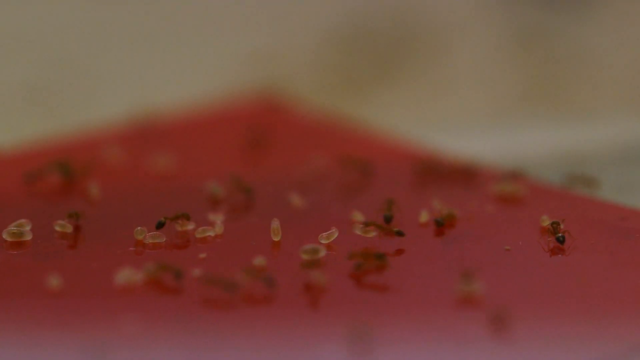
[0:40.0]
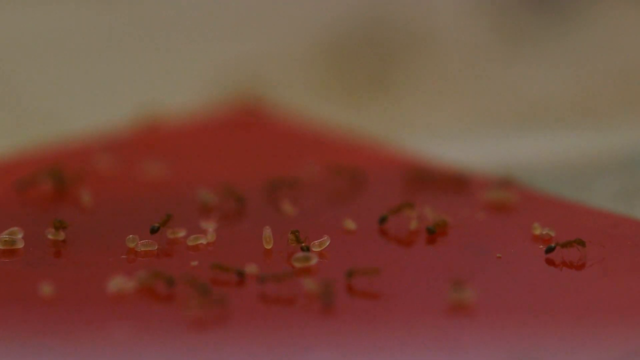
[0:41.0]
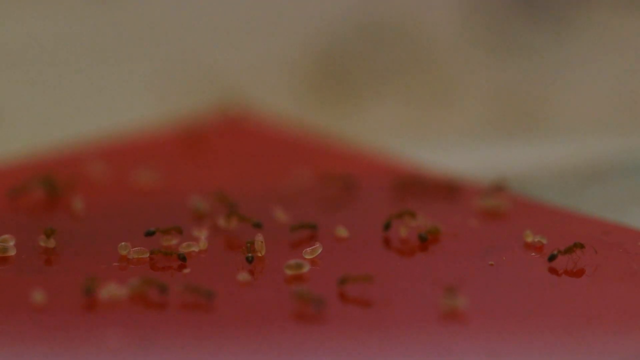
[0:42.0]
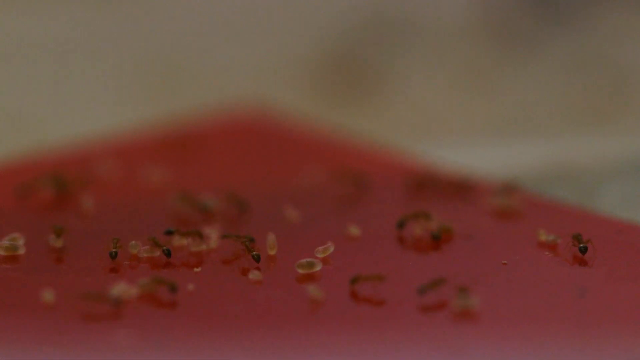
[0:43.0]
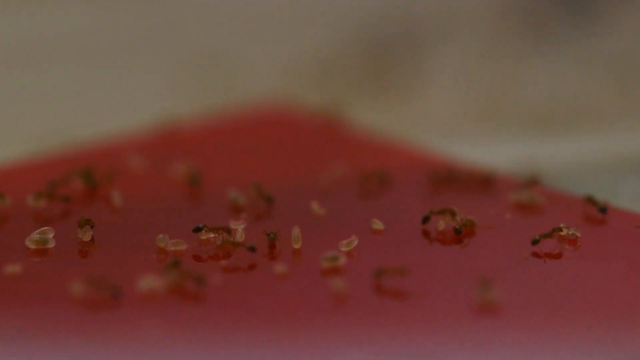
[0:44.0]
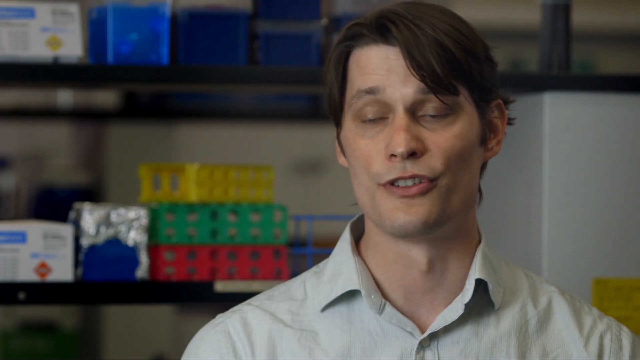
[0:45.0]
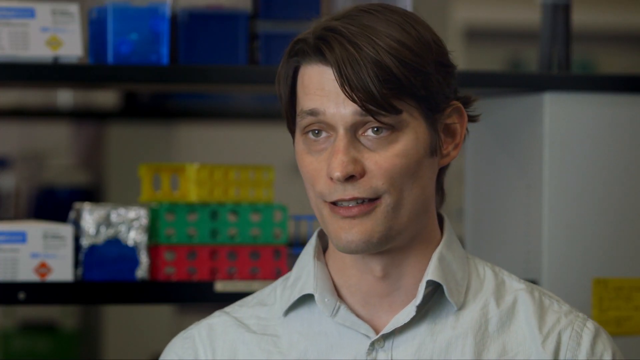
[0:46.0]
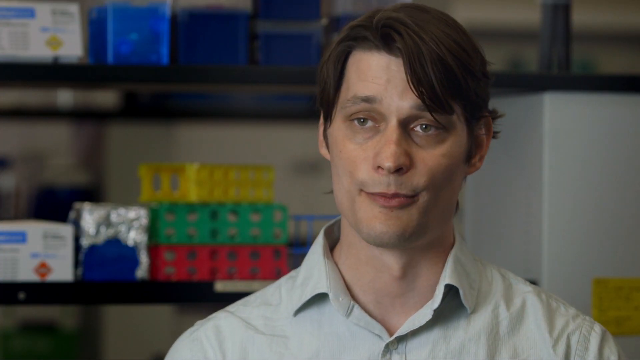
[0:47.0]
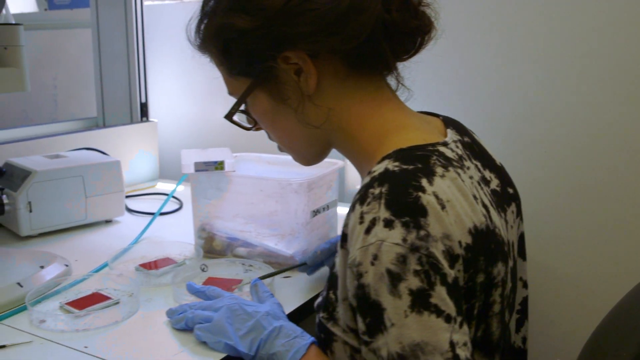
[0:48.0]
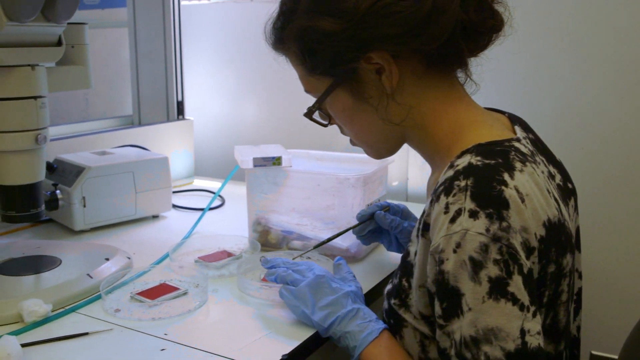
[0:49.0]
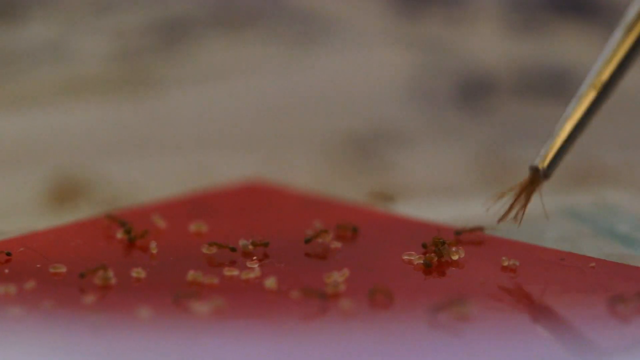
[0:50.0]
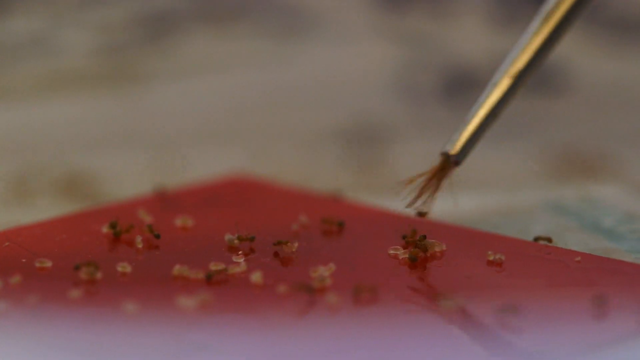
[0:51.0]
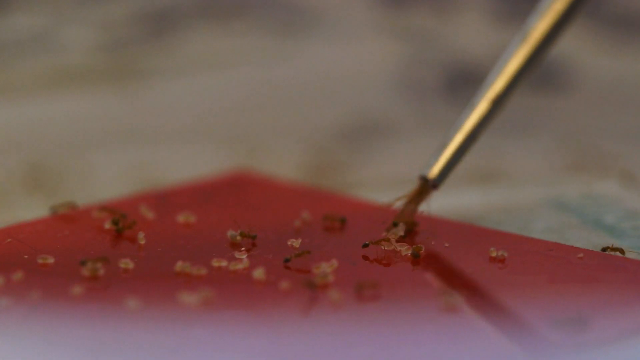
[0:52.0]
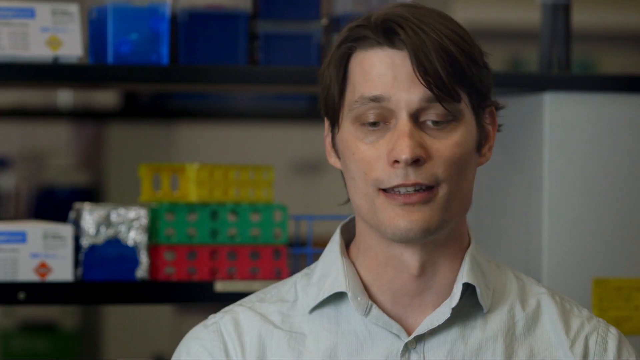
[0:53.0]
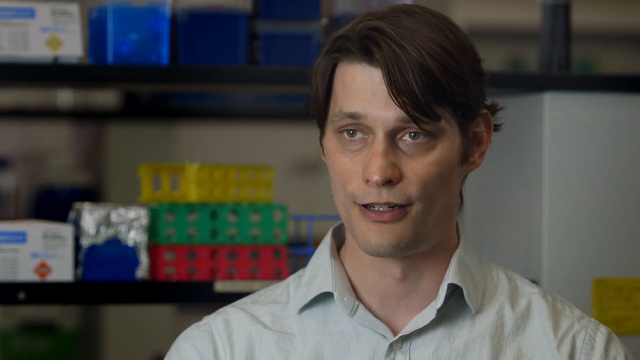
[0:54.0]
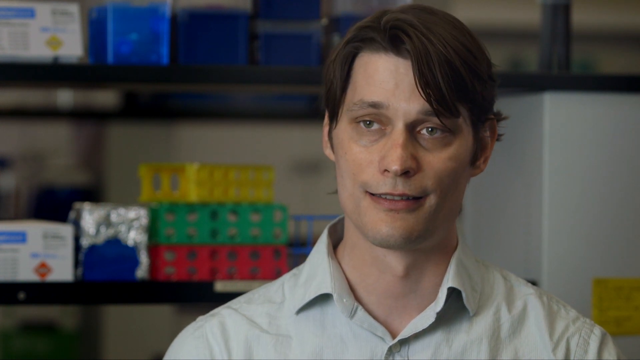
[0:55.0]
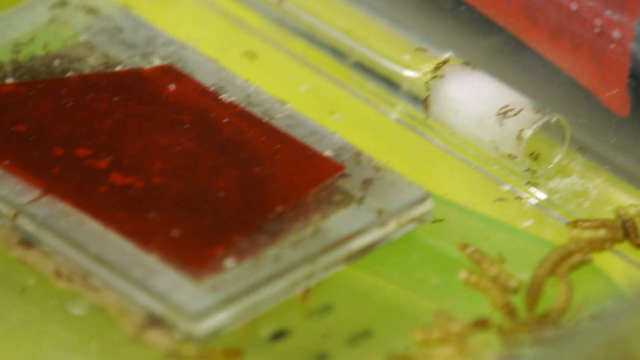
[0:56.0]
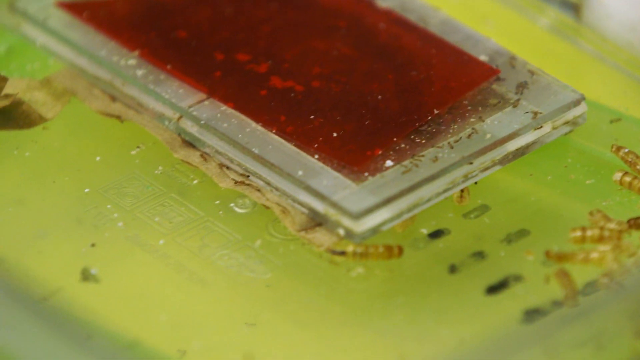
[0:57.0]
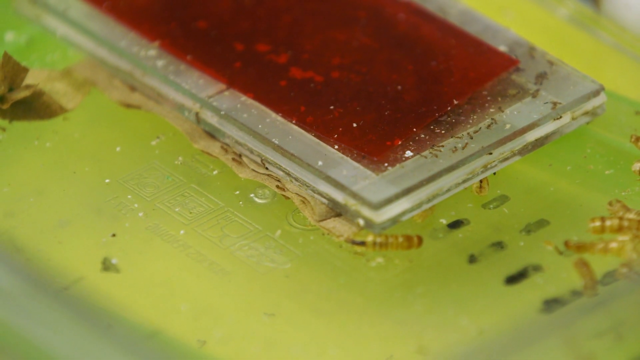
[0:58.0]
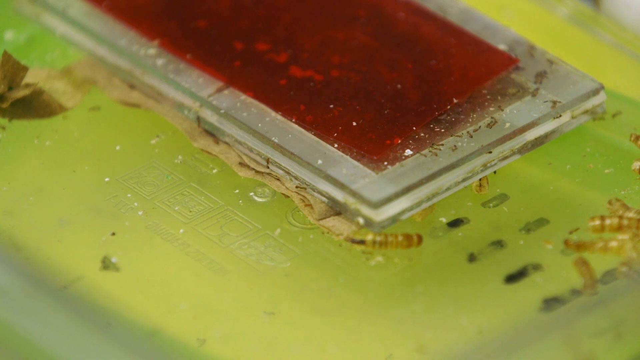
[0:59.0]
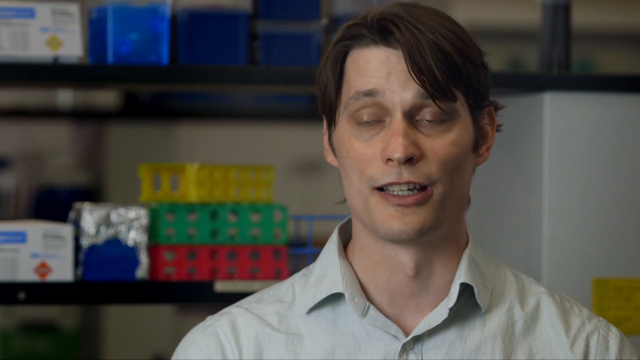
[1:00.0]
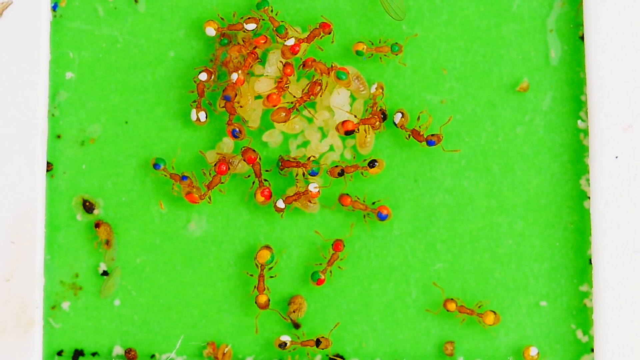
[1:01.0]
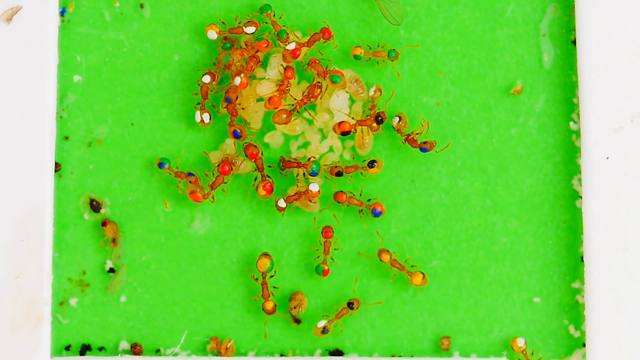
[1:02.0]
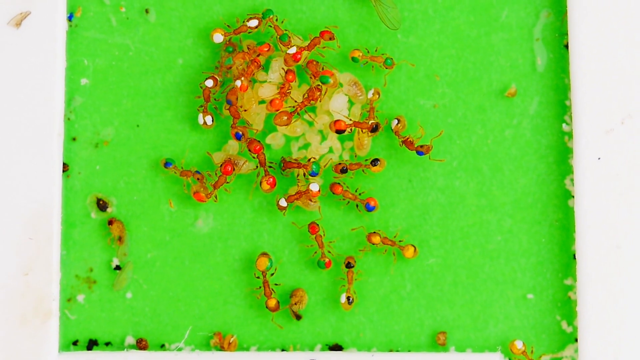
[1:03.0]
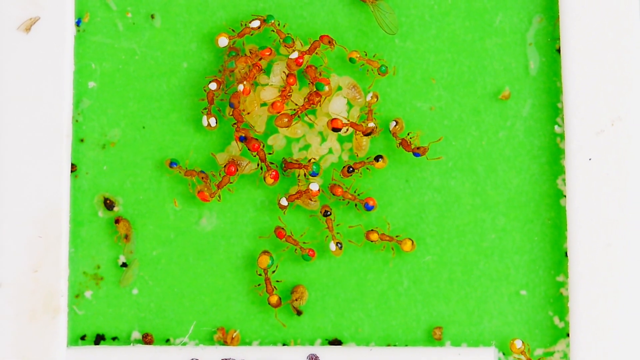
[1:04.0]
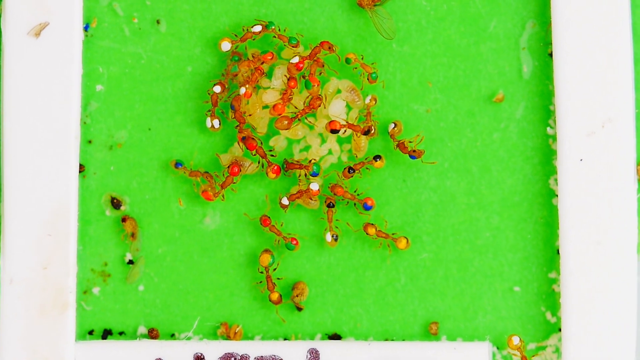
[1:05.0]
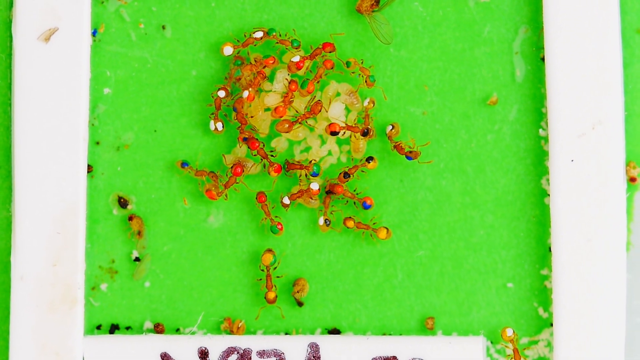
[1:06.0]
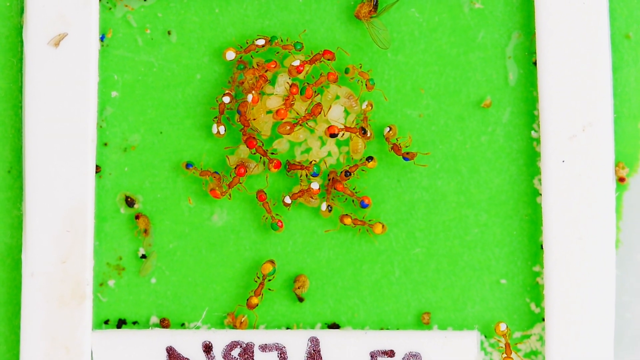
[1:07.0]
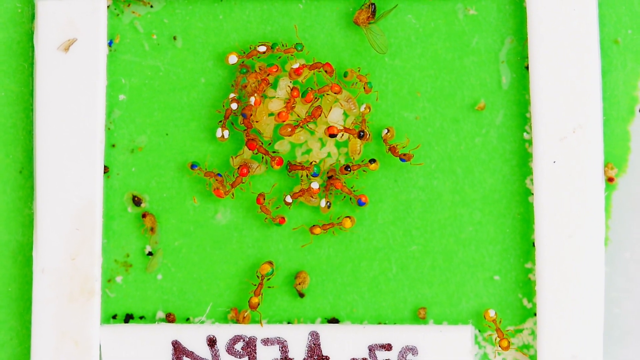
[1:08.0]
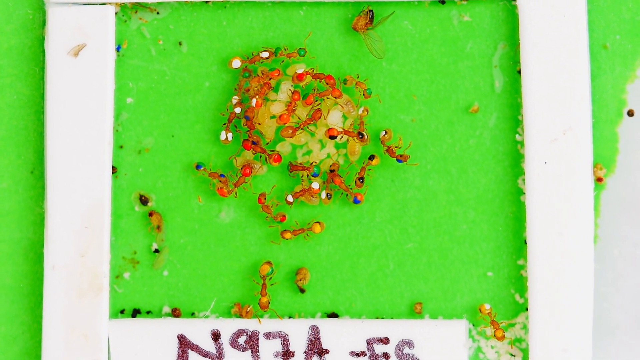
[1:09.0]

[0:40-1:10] Ants are seen slightly angled from above on a red surface, along with numerous translucent white eggs, as the ants scurry from place to place. The video changes to the man speaking to the camera, explaining something. Next, a young woman wears a black and white tie-dyed shirt, has her dark hair pulled back in a bun, and has on horn-rimmed glasses. She leans over a petri dish looking to her left and, wearing blue gloves, taps the petri dish with a paintbrush. A close-up of the paintbrush shows her tapping and picking up individual ant eggs as the ants scurry around. Another overhead shot shows more ants on a surface, with the red plastic in the center on top of a white plastic, the whole thing on a green tabletop; ants move around the outside. Then an overhead view shows ants with amber and brown bodies on a vivid lime green background, with a much smaller pile of eggs in the center. The ants move around, mostly with their antennae and feet.